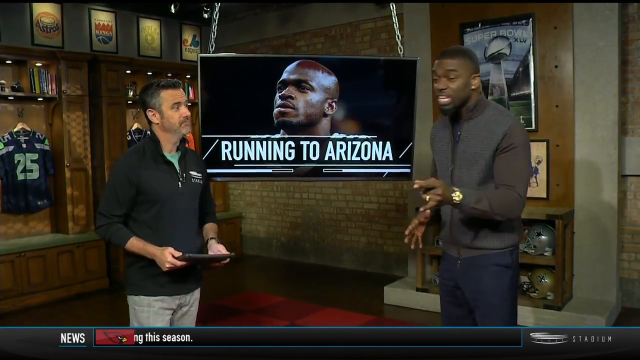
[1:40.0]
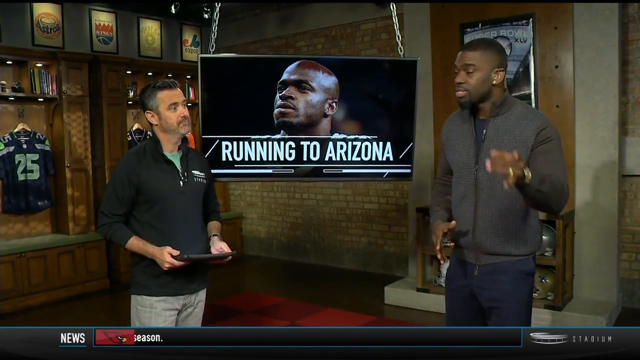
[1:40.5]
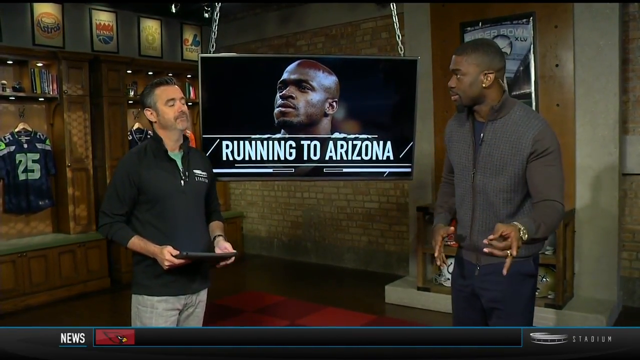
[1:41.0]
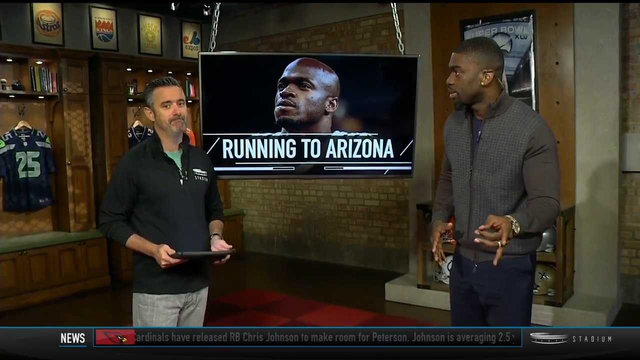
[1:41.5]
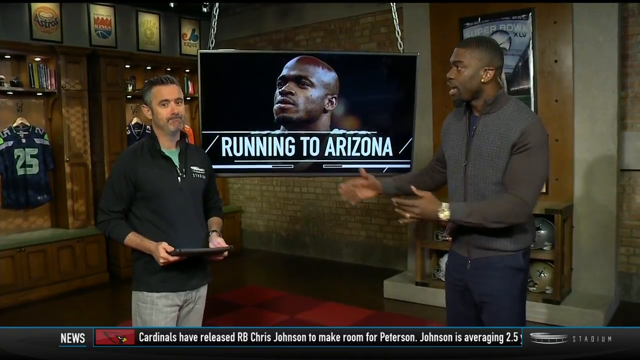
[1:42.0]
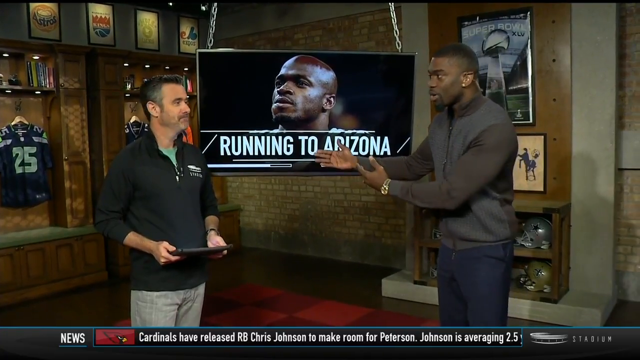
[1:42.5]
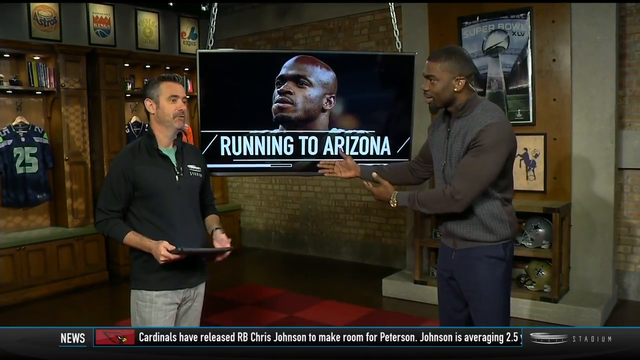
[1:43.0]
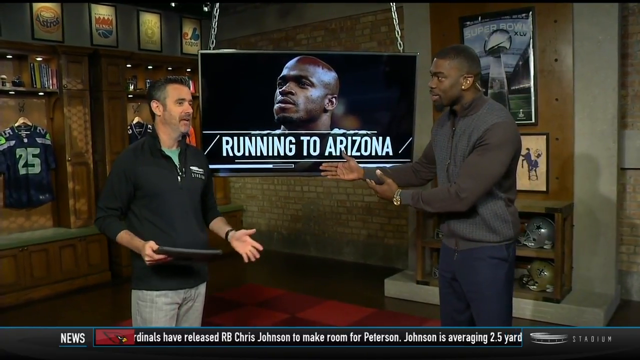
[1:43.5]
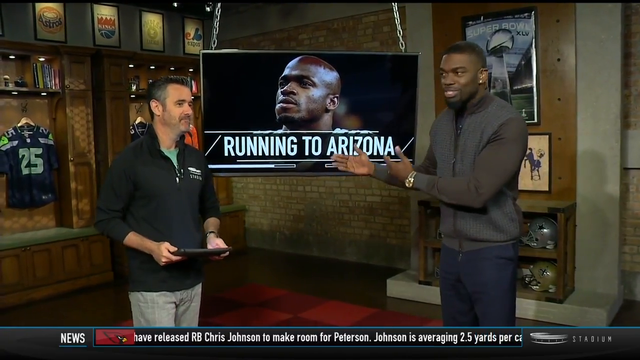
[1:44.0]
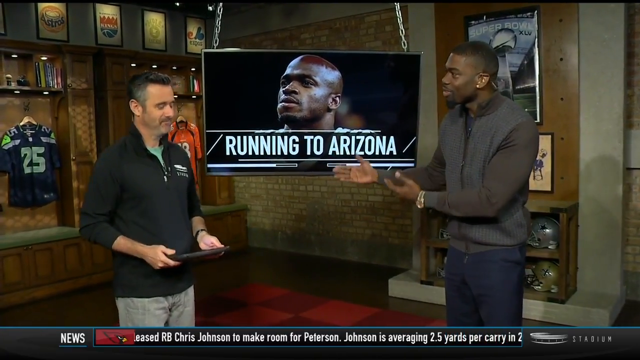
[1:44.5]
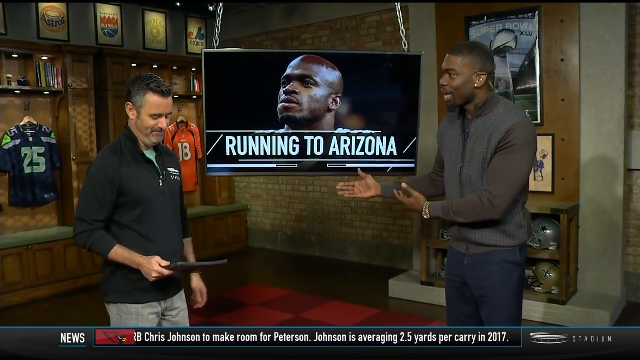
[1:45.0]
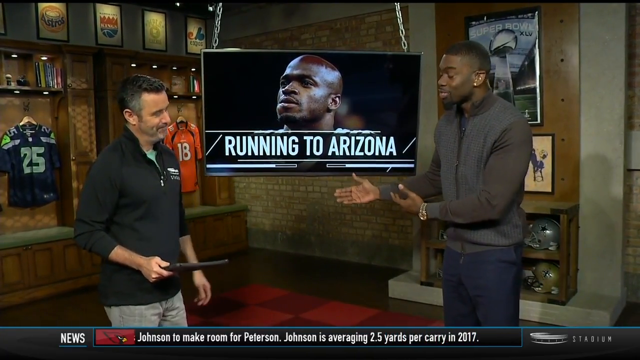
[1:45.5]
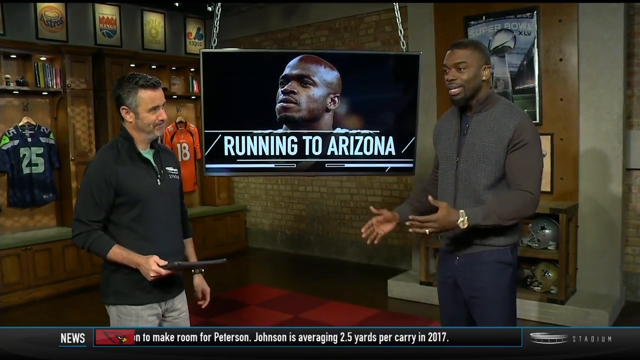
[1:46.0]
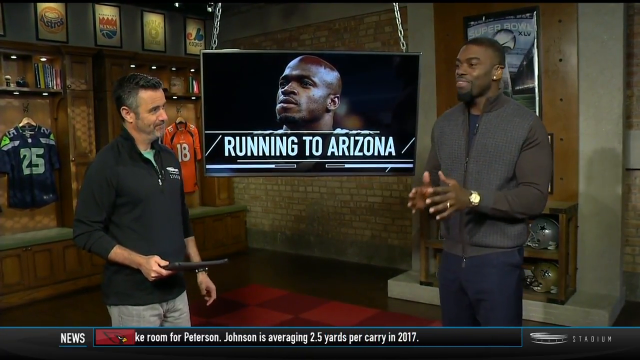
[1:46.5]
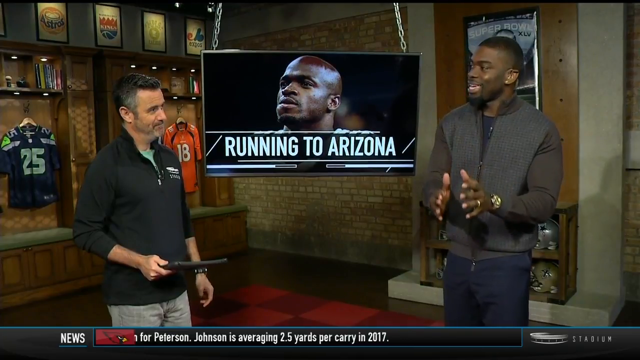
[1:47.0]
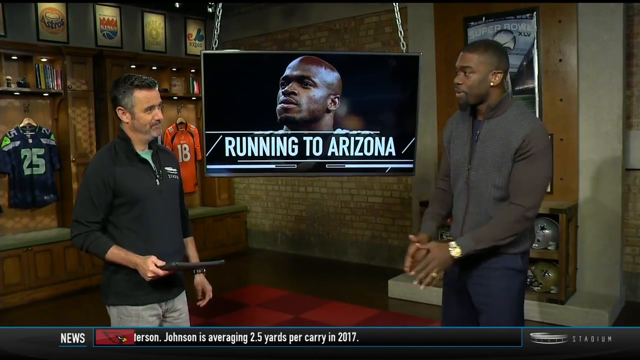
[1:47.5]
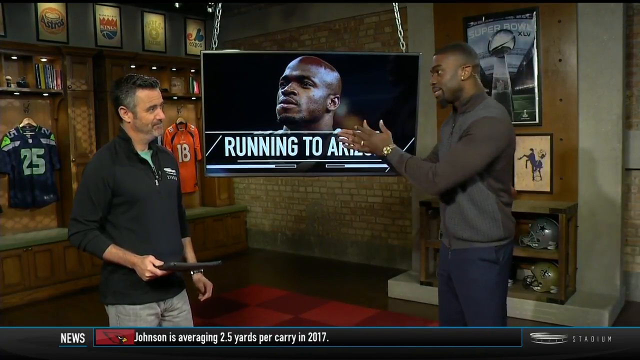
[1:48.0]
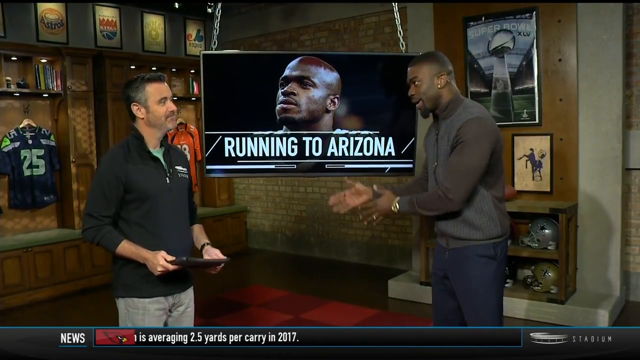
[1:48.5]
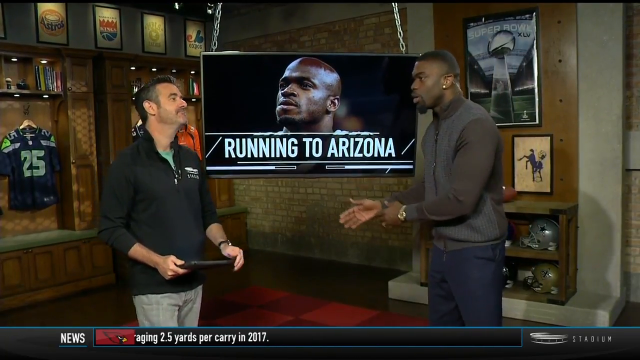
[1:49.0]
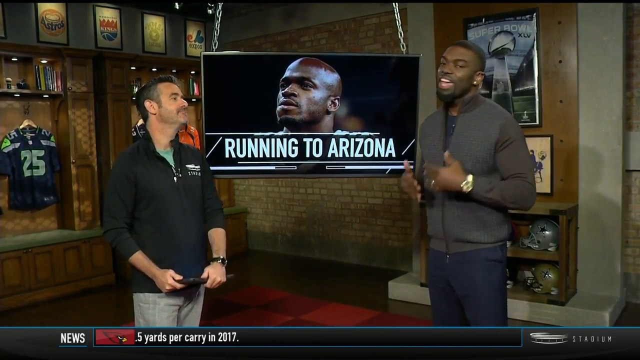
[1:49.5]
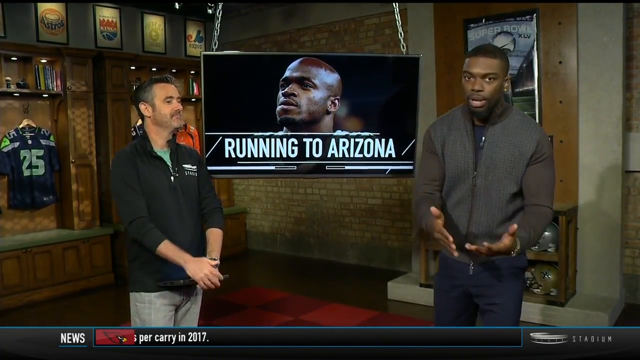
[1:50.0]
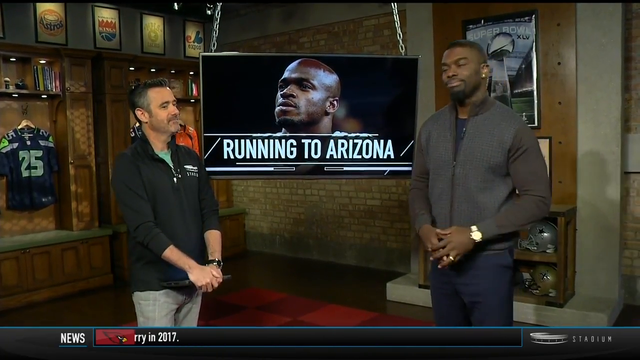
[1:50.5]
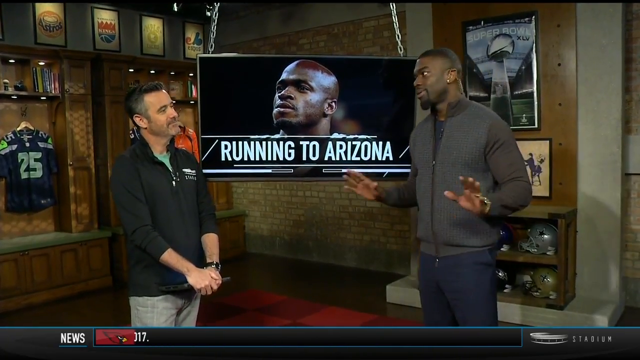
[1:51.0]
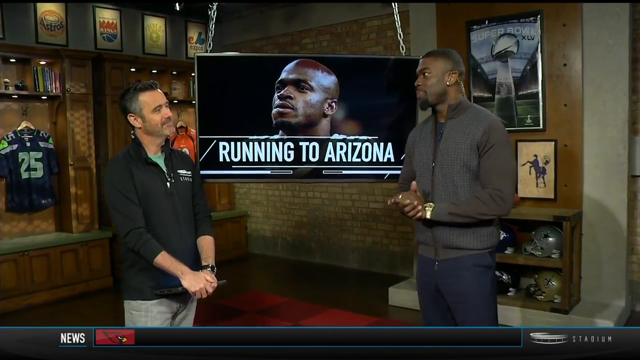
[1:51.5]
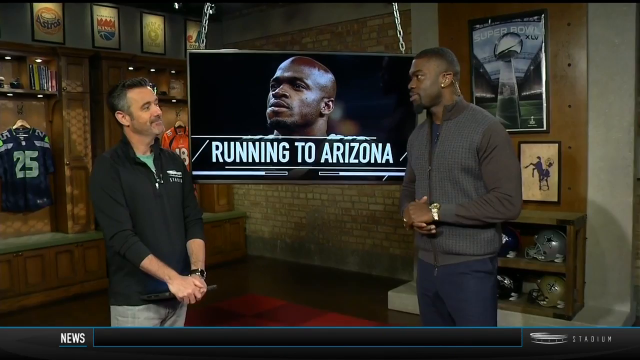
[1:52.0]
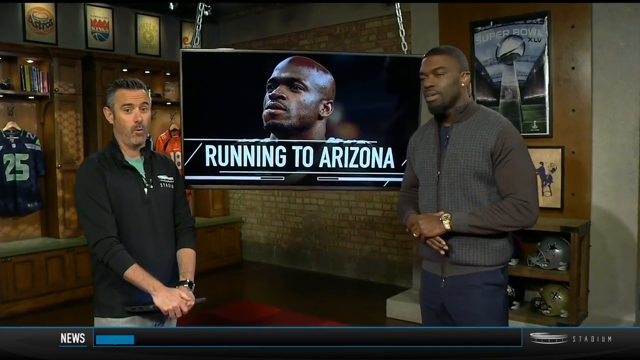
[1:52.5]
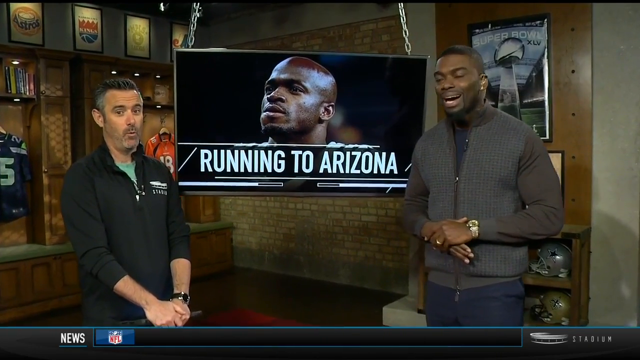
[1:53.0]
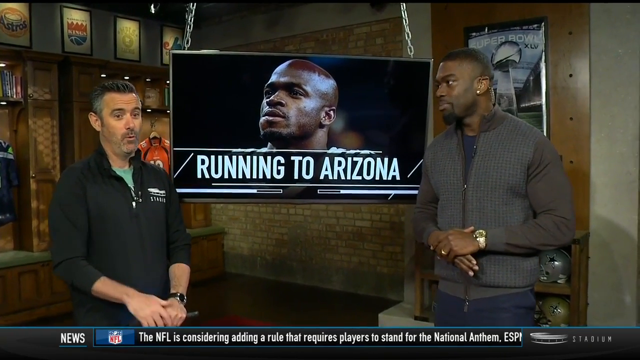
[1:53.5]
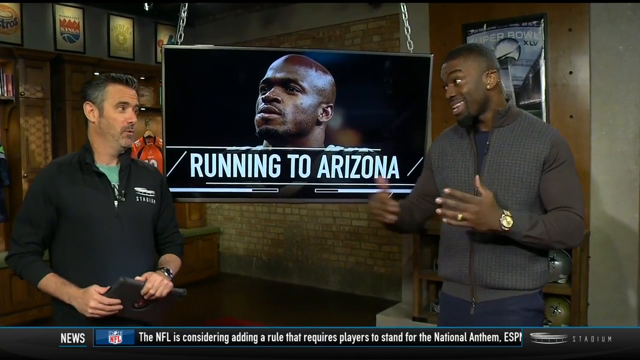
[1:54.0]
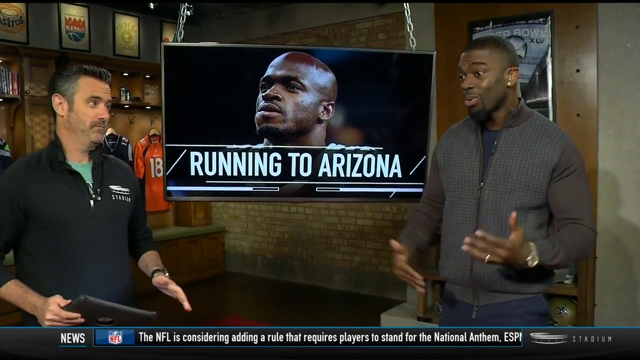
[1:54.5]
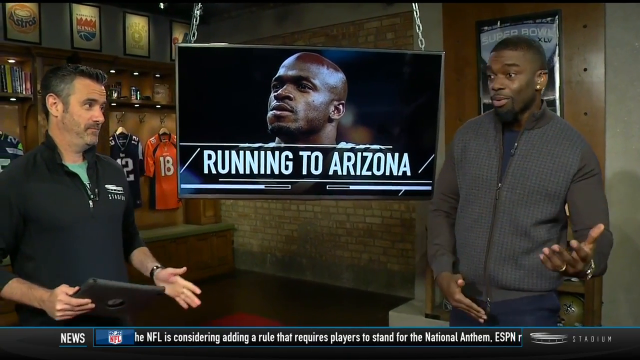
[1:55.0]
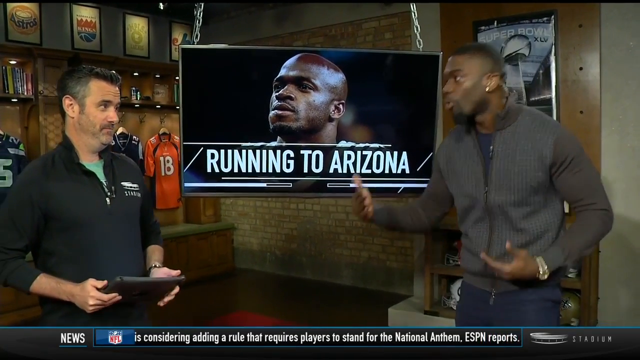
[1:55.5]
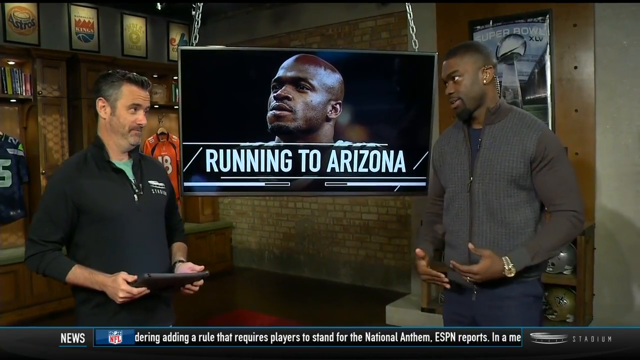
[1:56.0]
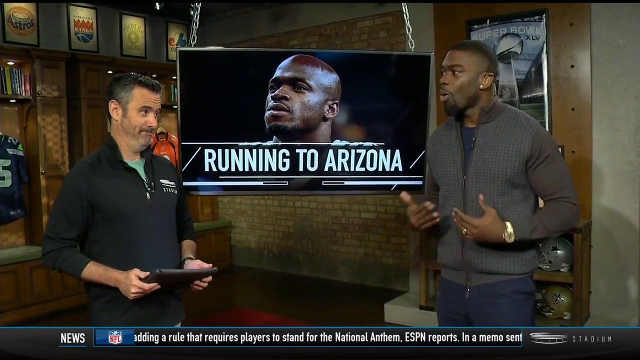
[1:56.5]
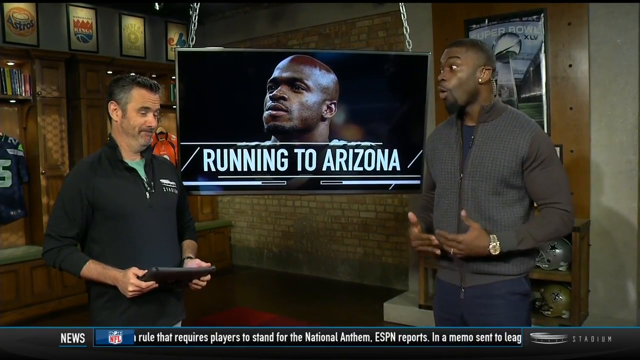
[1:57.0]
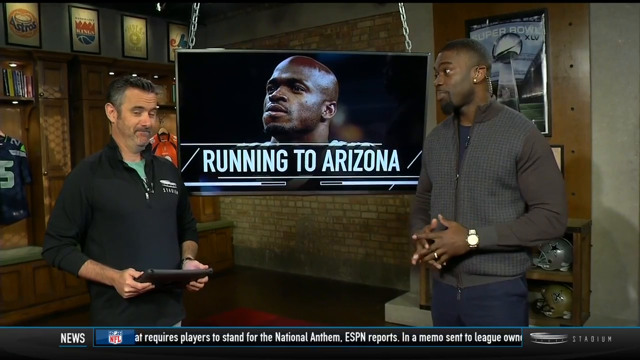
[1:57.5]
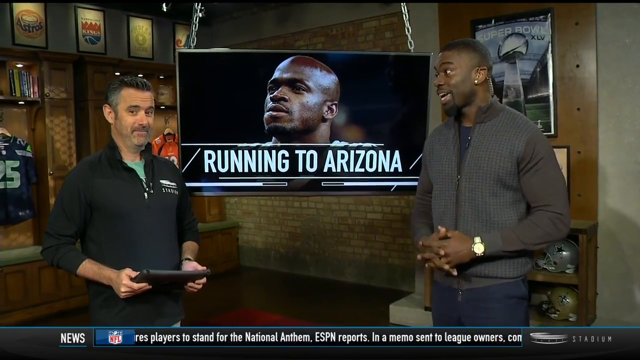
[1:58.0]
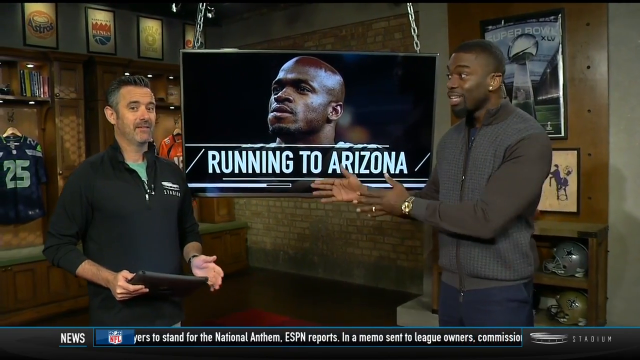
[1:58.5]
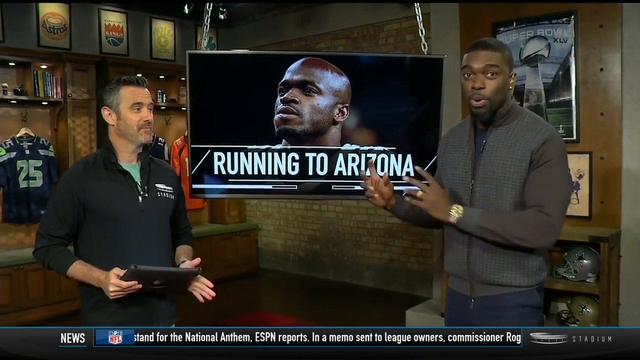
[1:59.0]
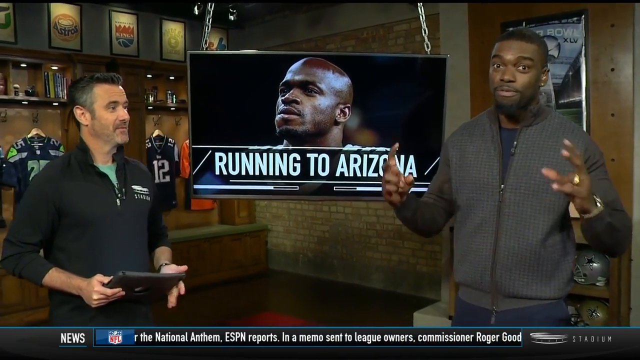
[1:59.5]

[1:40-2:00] The two men continue talking. The man on the right extends his hands, gesturing animatedly with both hands as he talks to the man on the left; he has a small stud earring in his left ear and goes back and forth between looking at the man on the left and looking at the camera. The man on the left holds the computer tablet in front of him and mostly listens. When he first reacts, he turns to the camera with something of a surprised look, his hands clasped in front of him and the tablet resting against his body; then he holds the tablet with one hand on each side as he listens and responds a little. The TV screen between them still reads "running to Arizona" with the player's face above it.